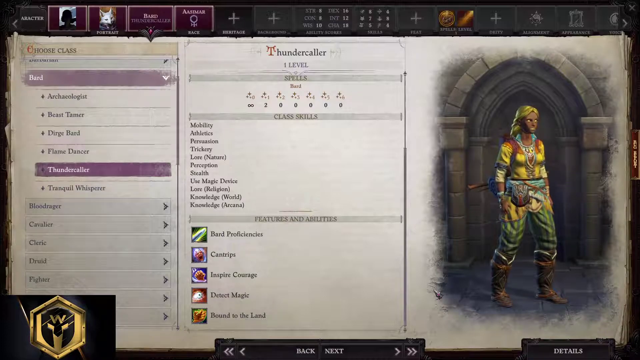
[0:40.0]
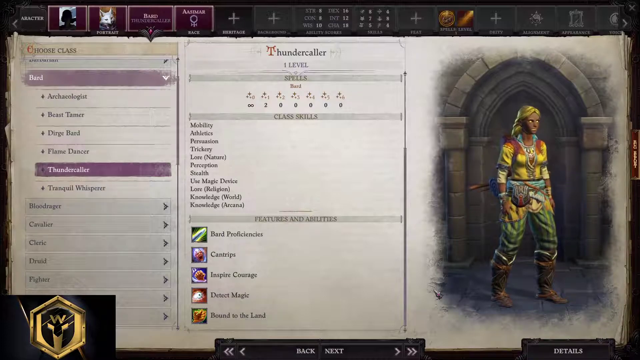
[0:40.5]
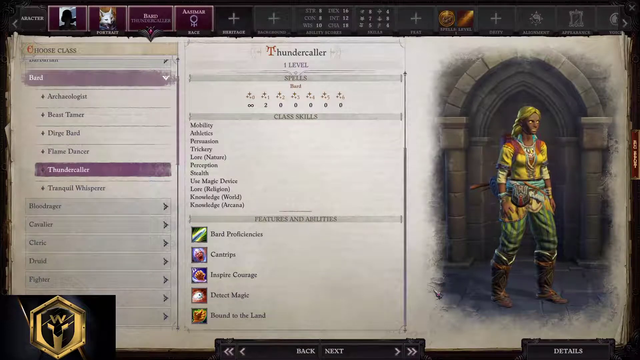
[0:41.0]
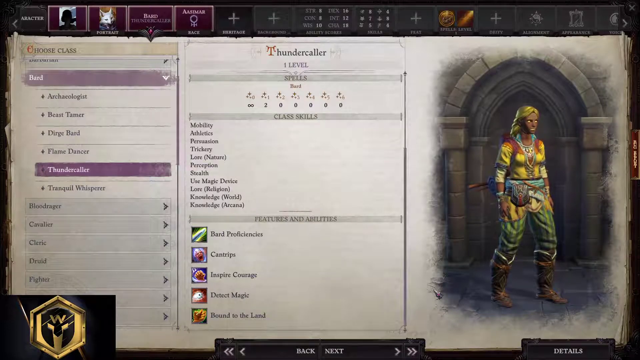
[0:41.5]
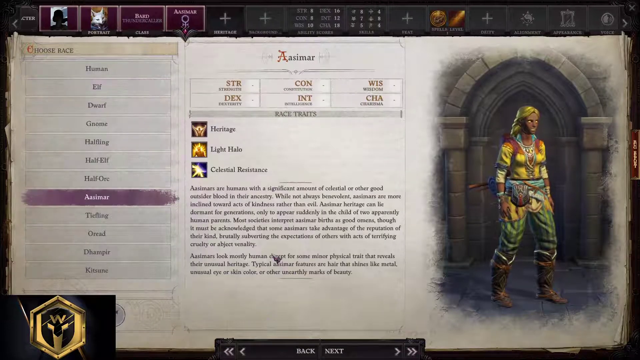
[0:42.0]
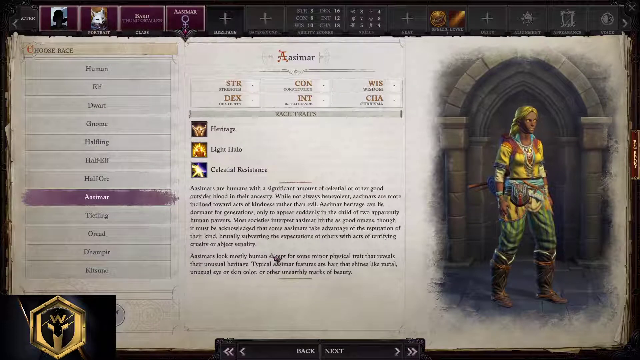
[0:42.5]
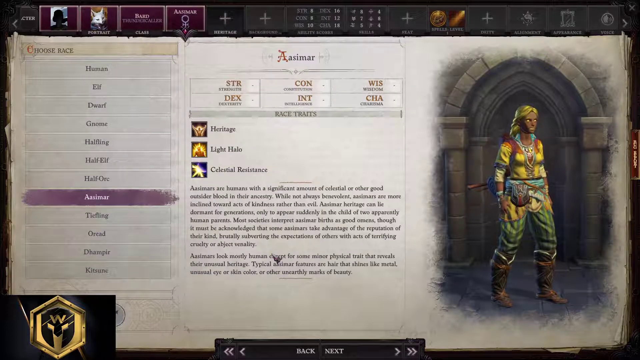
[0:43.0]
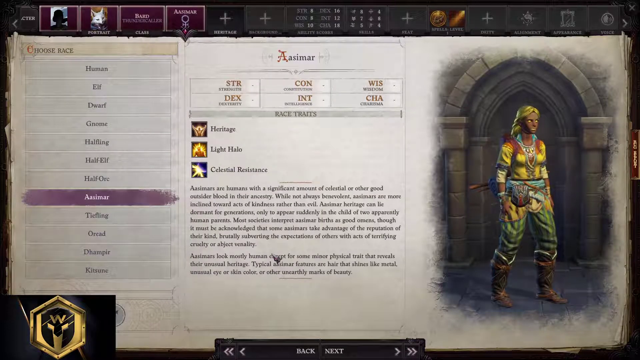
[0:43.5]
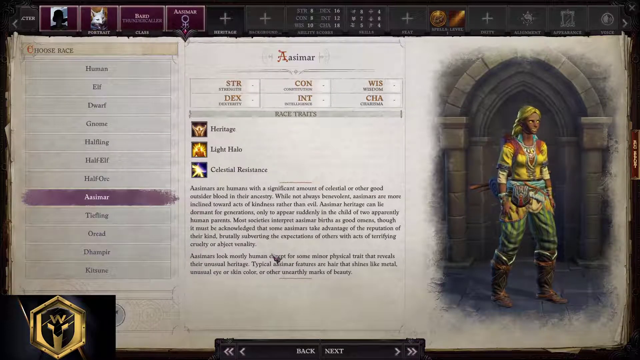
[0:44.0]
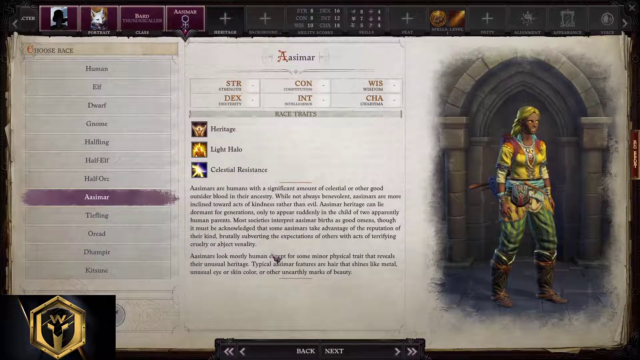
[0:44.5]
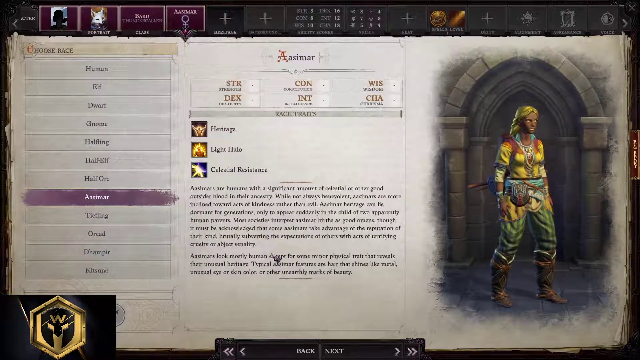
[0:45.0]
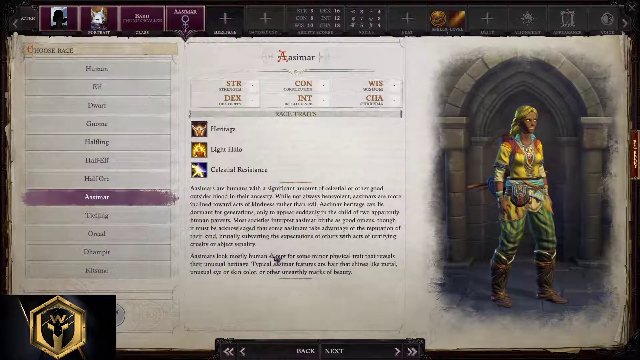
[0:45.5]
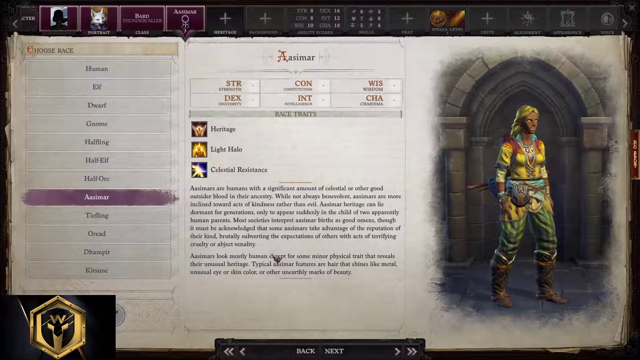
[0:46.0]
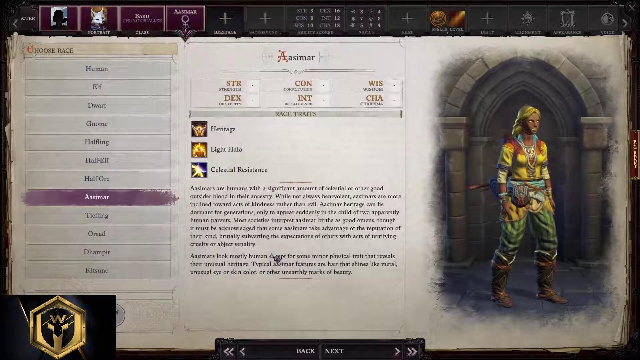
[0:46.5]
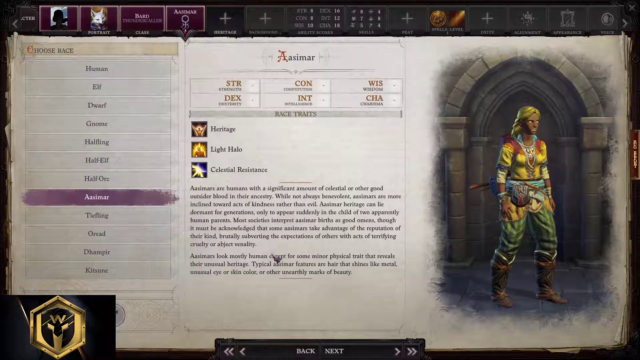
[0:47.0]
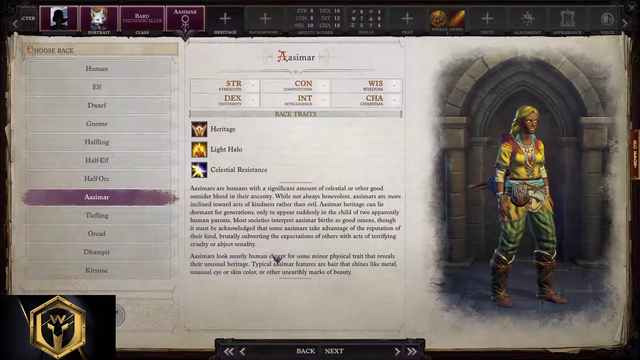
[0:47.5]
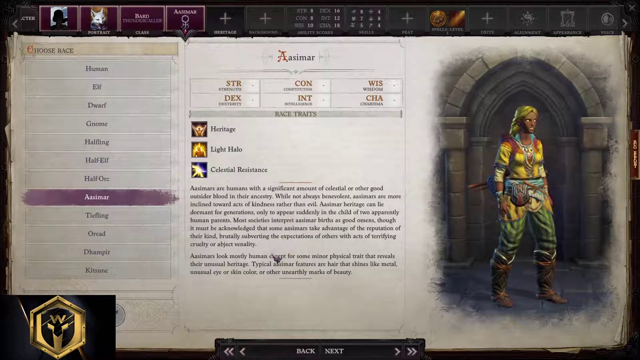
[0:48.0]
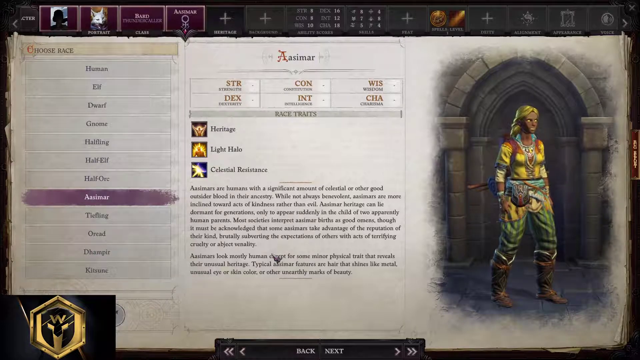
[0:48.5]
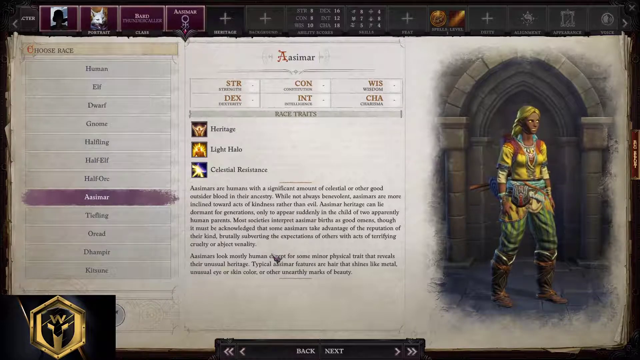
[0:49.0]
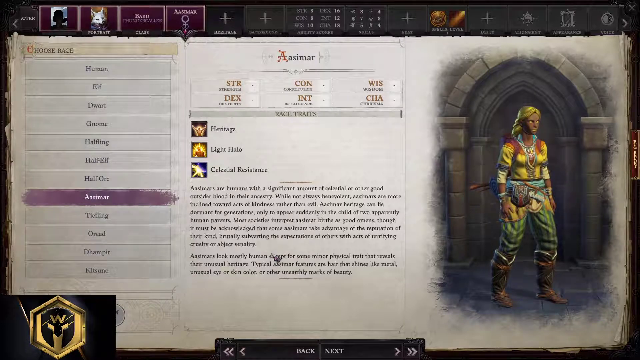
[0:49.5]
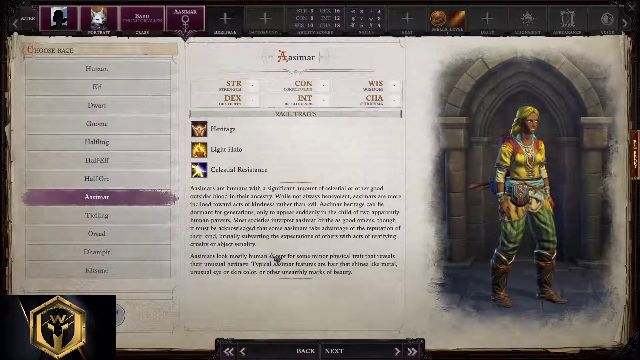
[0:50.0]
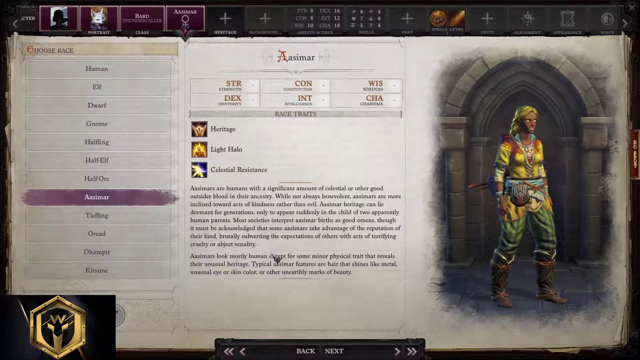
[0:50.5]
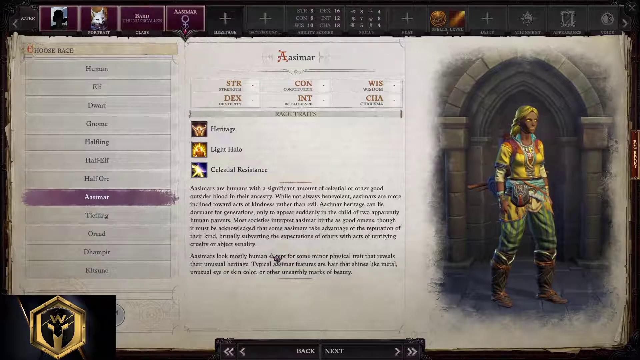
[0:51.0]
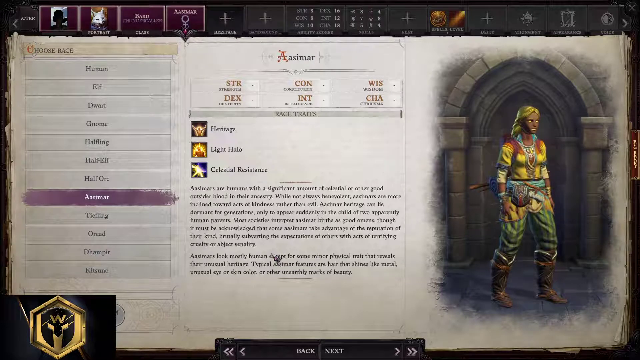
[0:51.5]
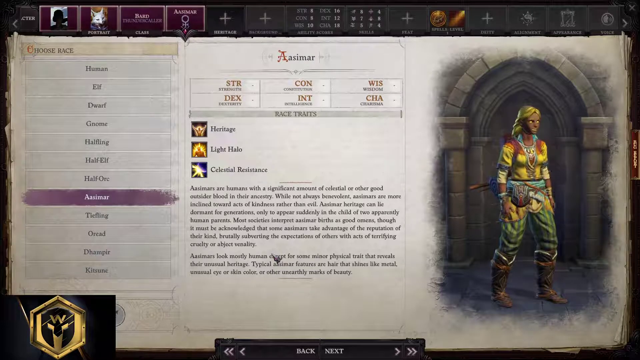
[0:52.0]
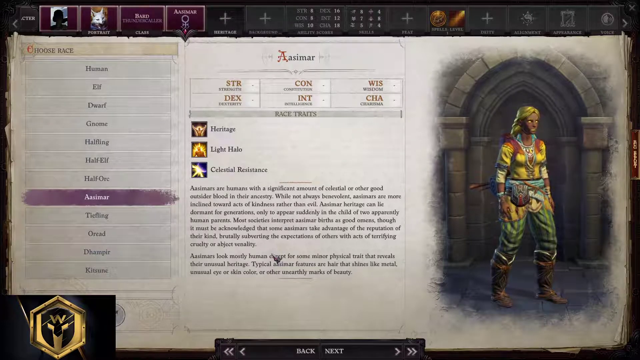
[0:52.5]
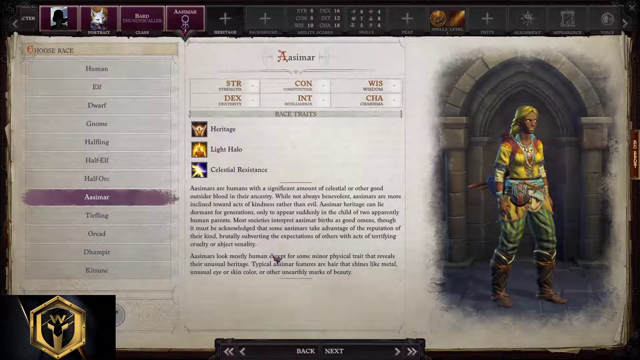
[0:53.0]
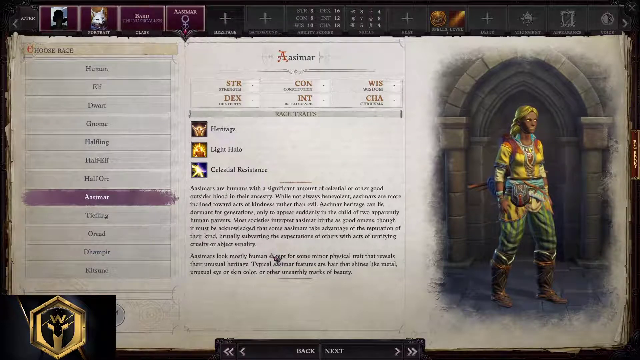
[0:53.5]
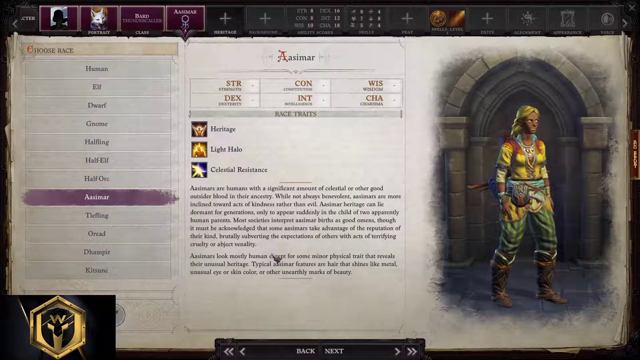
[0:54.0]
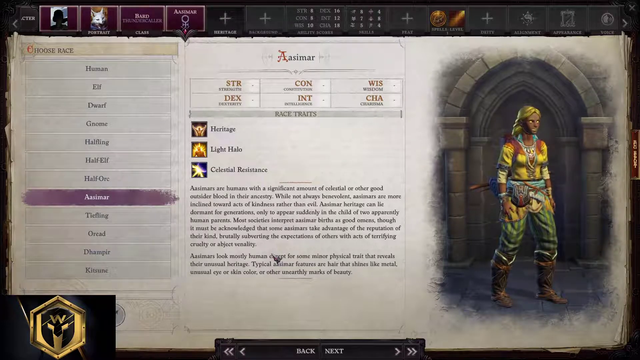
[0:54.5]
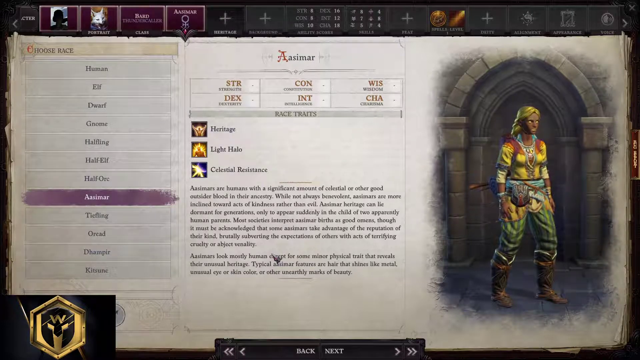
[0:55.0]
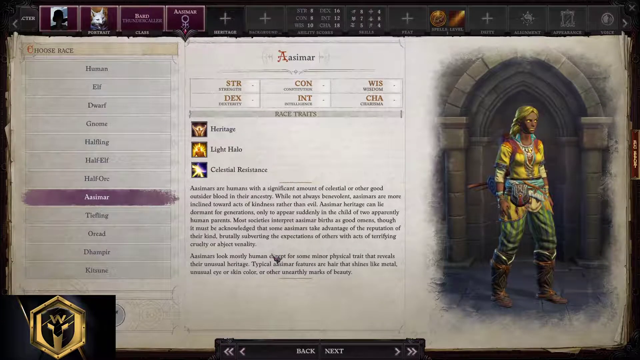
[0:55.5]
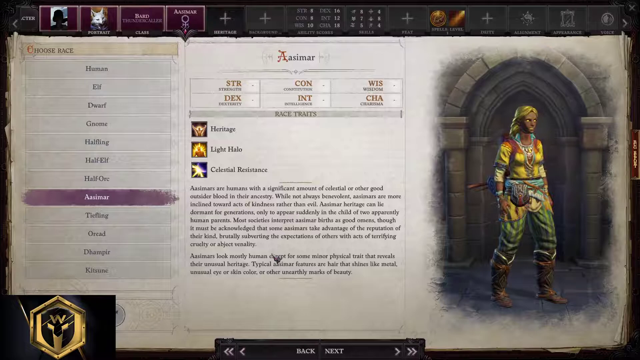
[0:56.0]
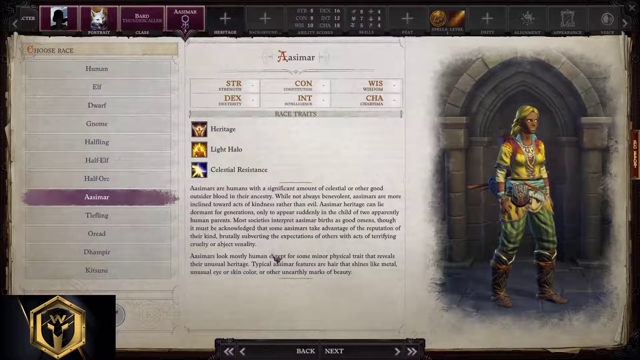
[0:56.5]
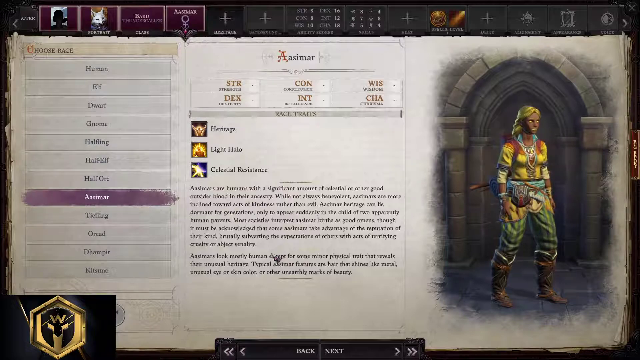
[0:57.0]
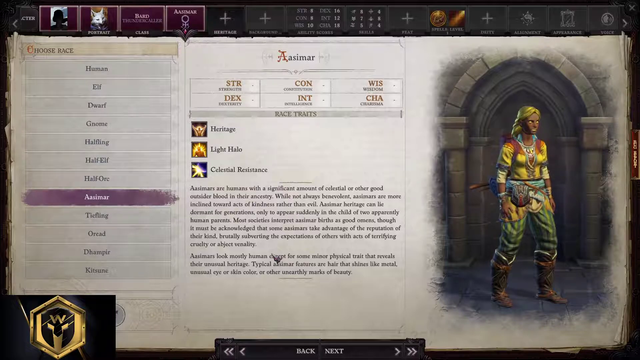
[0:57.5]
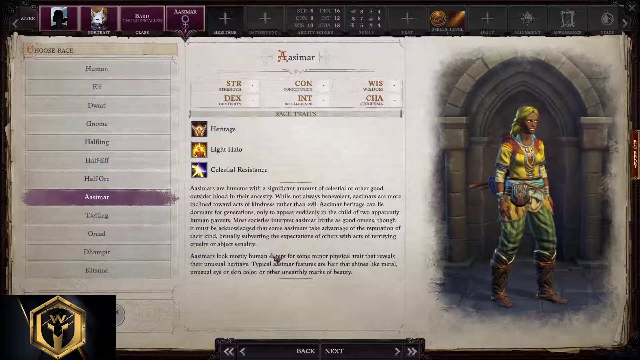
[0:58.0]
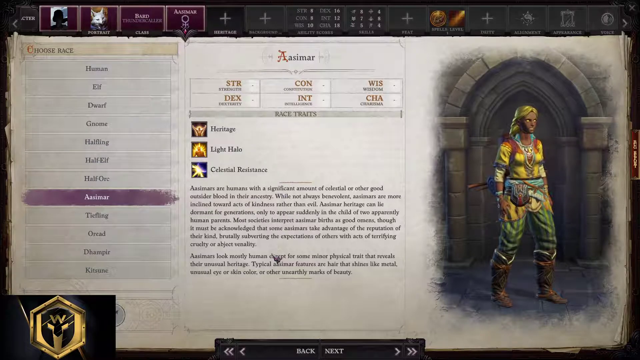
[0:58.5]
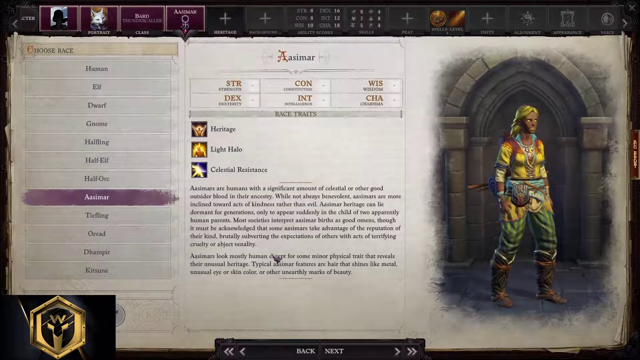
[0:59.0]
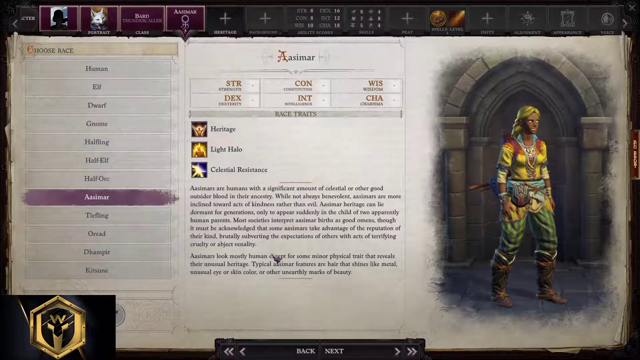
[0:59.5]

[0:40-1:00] In the background of this video game screen is kind of an archway made of concrete with a character in it. On the left side the screen says "choose race" and lists Human, Elf, Dwarf, Gnome, Halfling, Half-Elf, Asimar, Tiefling, Orid, Damphir and Kitsune. The screen then switches to background selection, showing Andorran Diplomat, with text saying it adds persuasion to the list of her skills and that she gains two bonus points on diplomacy skill checks. The view switches to full screen, showing the text "Asimars are humans with significant amount of celestial or other good outsider blood in their ancestry. While not always benevolent, Asimars are more inclined toward acts of kindness rather than evil. Asimar heritage can lie dormant for generations only to appear suddenly in the child of two apparently human parents. Most societies interpret births as a good omen, though it must be acknowledged that some Asimars take advantage of the reputation of their kind."